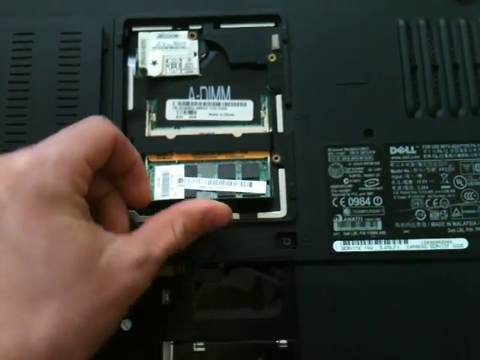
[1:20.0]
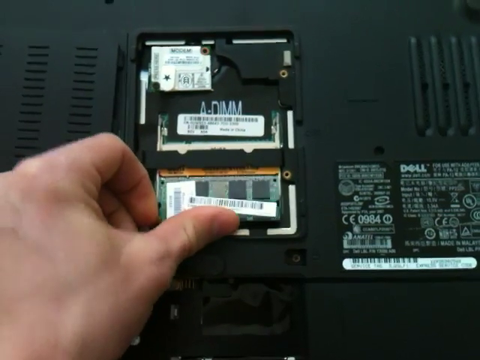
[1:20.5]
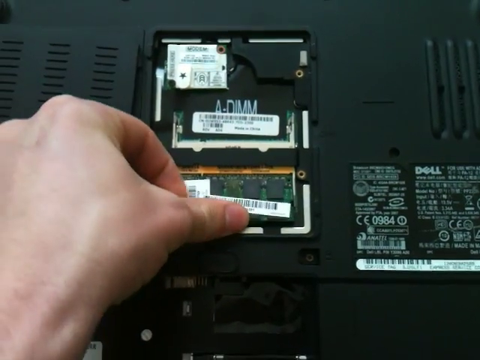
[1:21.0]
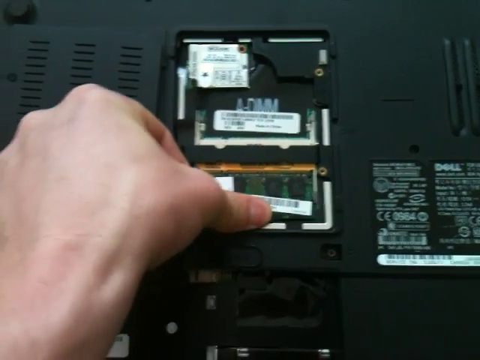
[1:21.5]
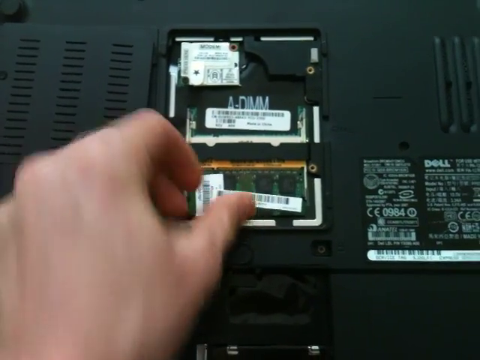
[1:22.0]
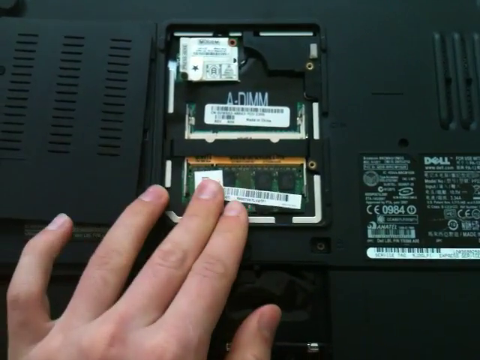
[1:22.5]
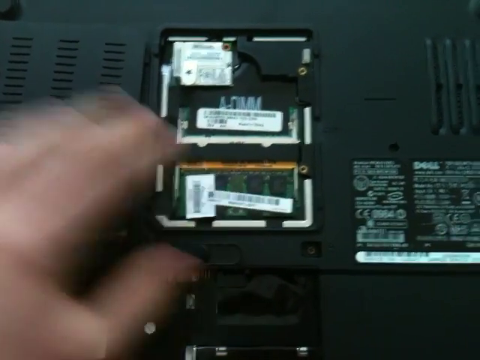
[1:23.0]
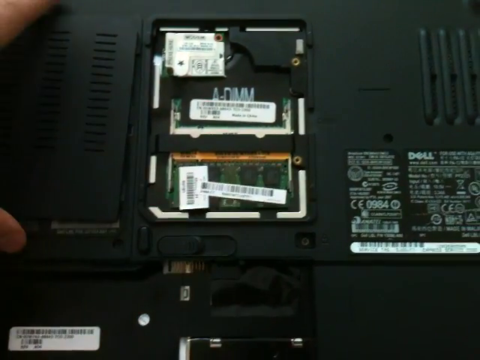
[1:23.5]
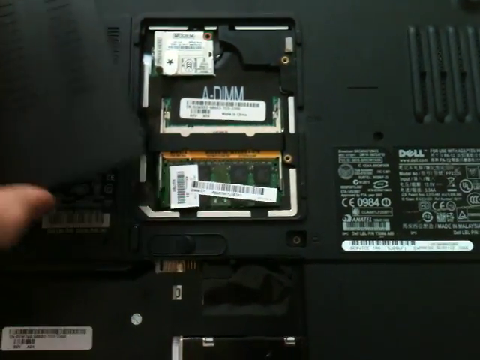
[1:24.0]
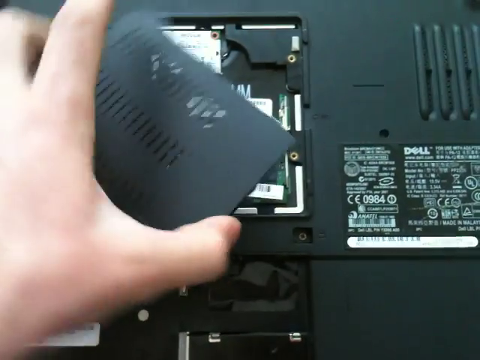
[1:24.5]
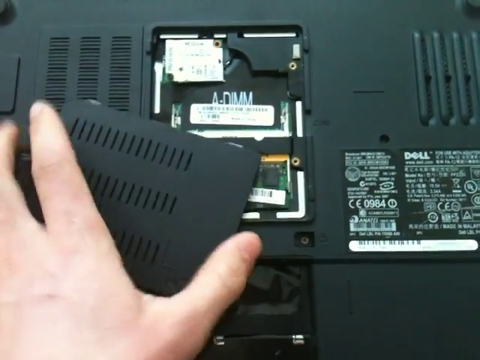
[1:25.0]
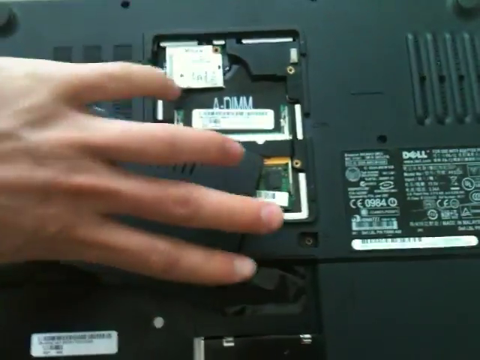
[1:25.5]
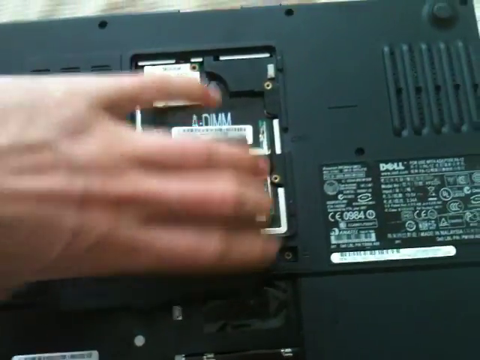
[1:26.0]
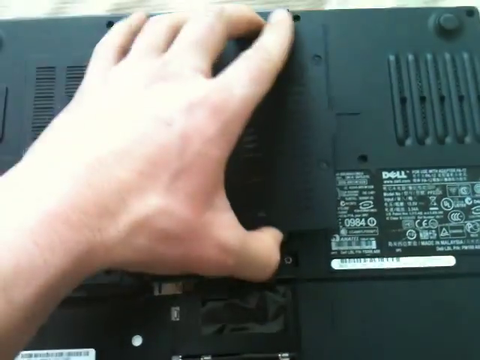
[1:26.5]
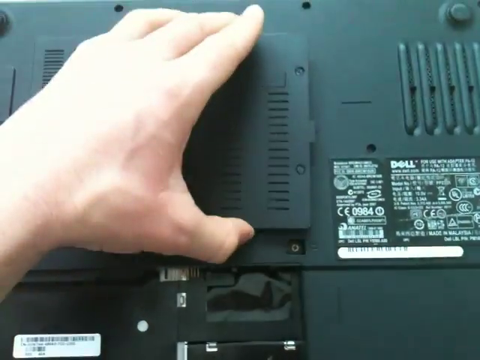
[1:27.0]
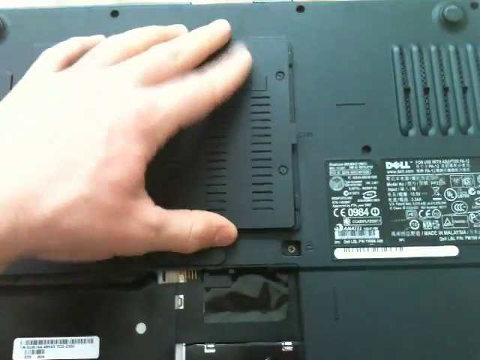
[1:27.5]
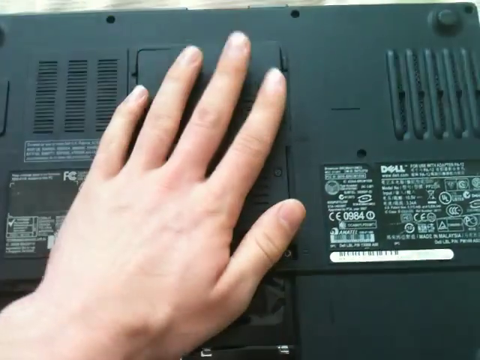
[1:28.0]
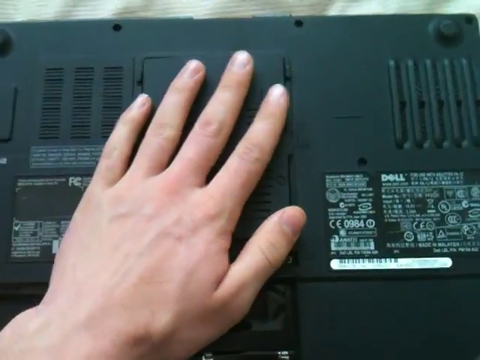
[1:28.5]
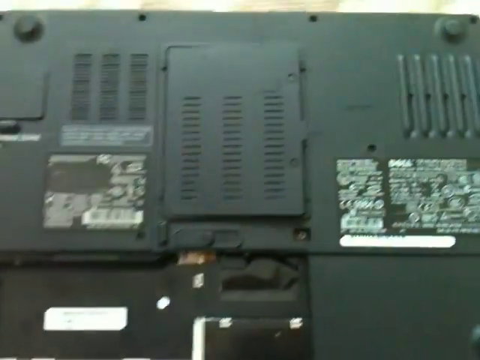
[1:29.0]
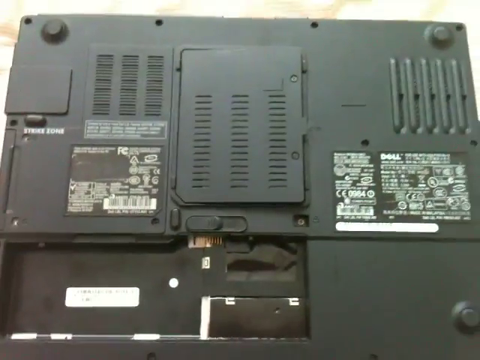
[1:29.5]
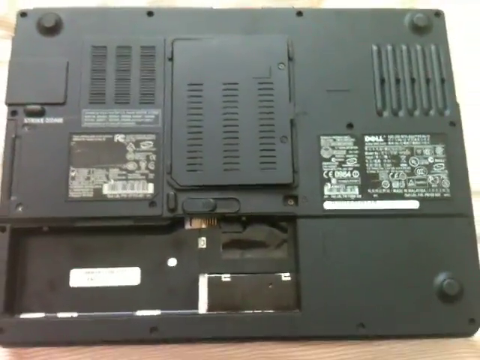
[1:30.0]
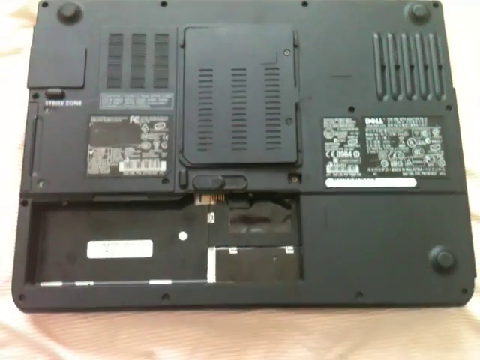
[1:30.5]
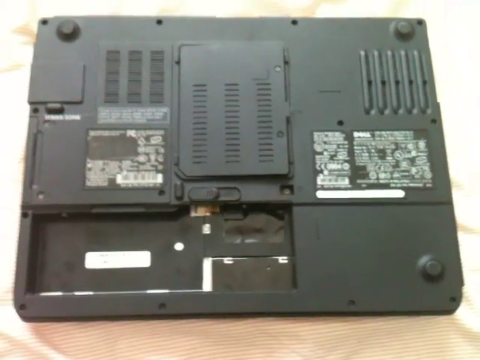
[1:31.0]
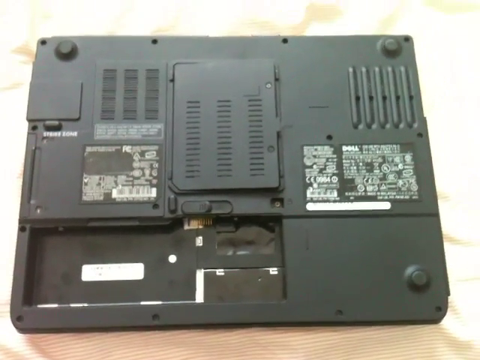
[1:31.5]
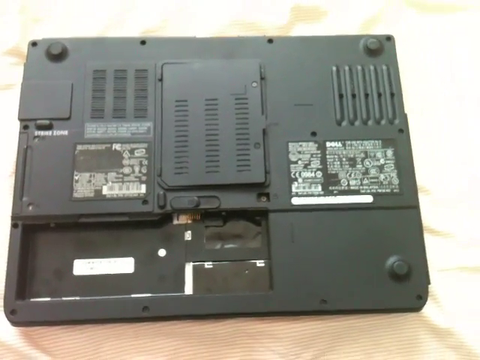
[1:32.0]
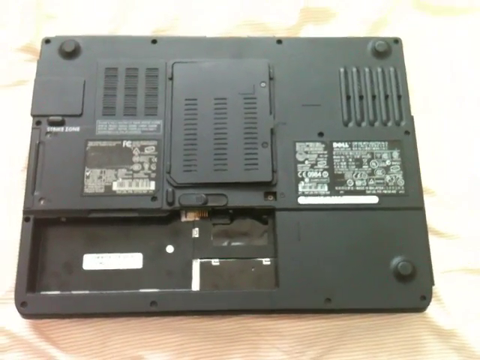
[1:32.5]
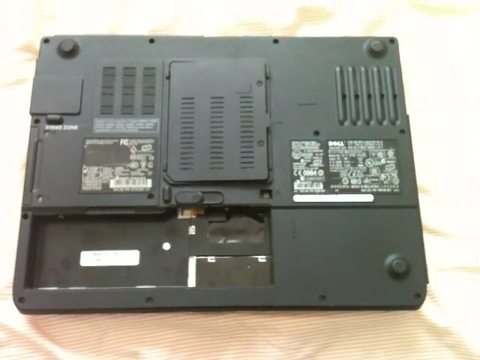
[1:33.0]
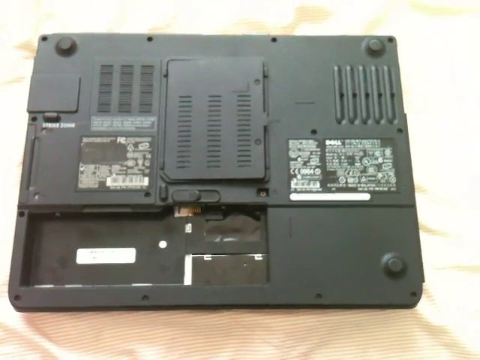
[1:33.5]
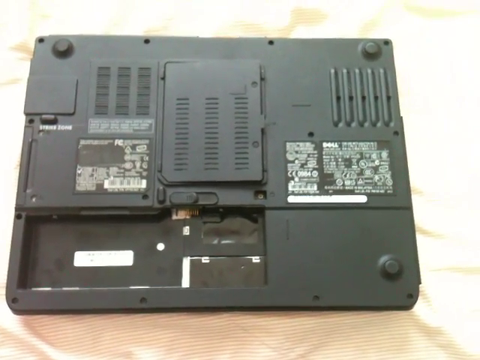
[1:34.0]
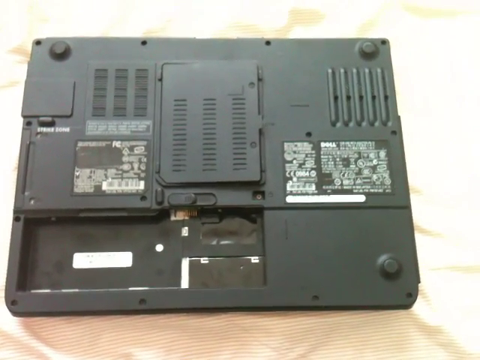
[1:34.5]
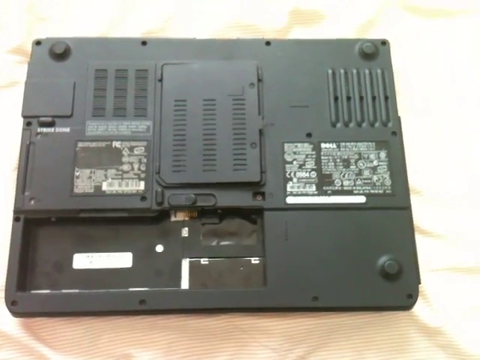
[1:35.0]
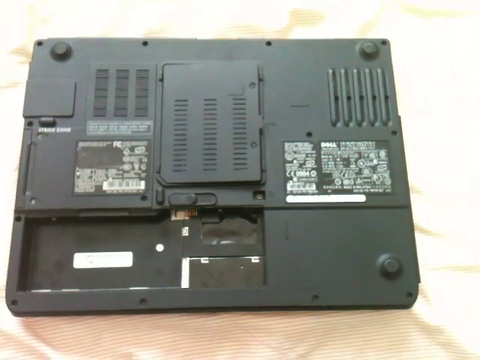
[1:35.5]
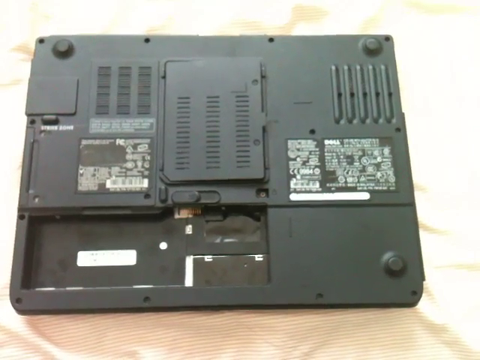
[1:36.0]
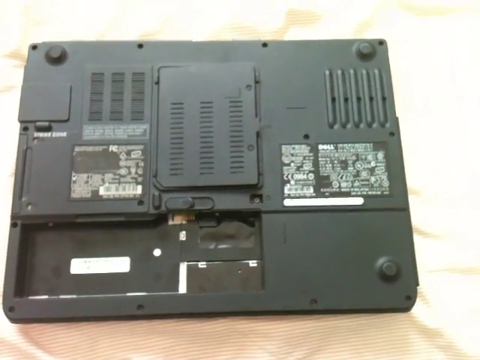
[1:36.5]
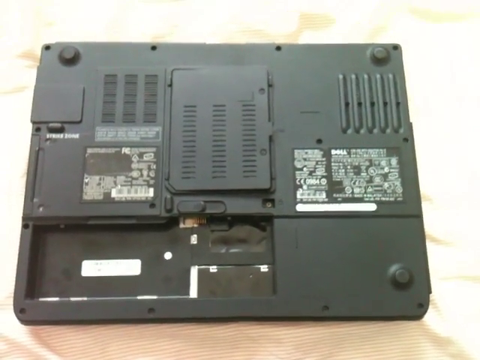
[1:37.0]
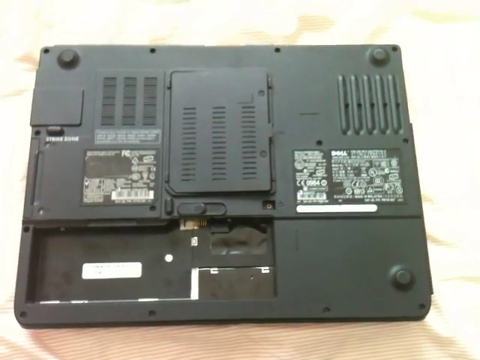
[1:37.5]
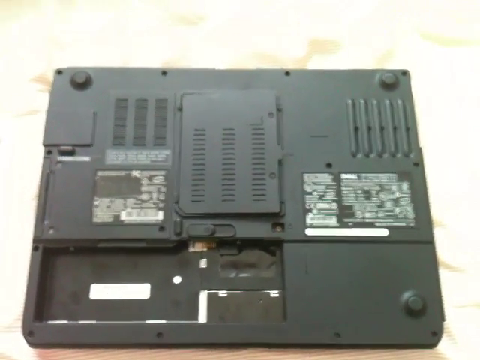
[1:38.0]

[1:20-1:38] The man returns the part he removed and then puts the back cover he had removed back onto the back of the device. The view then zooms out so the device can be seen clearly; the part is not fully closed, but the cover has been returned to where it was.